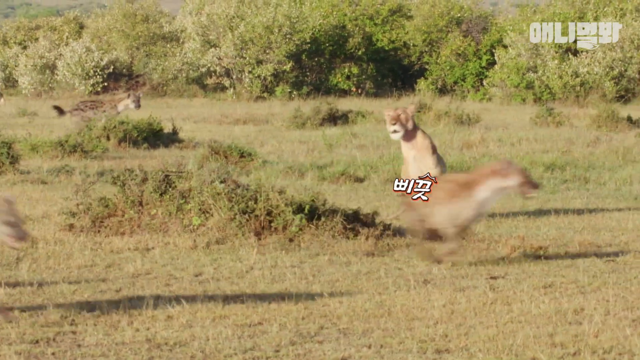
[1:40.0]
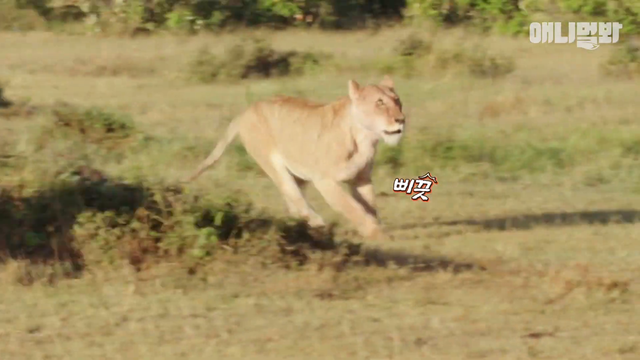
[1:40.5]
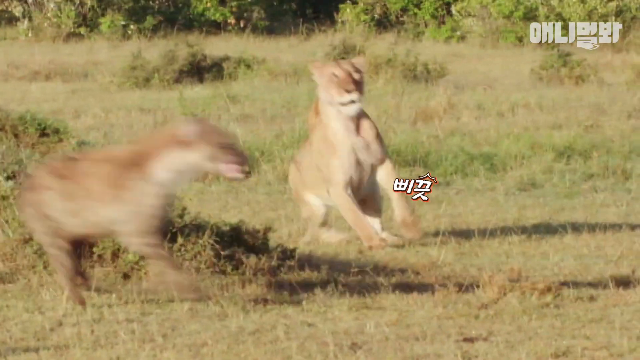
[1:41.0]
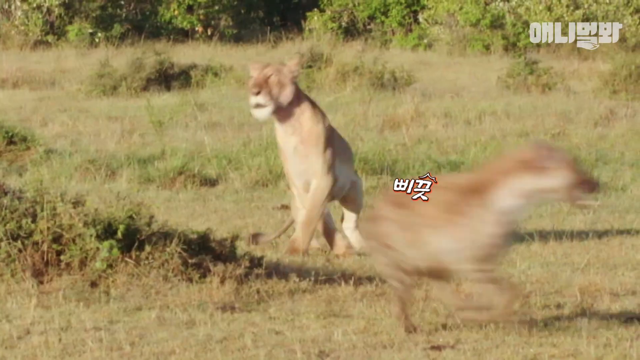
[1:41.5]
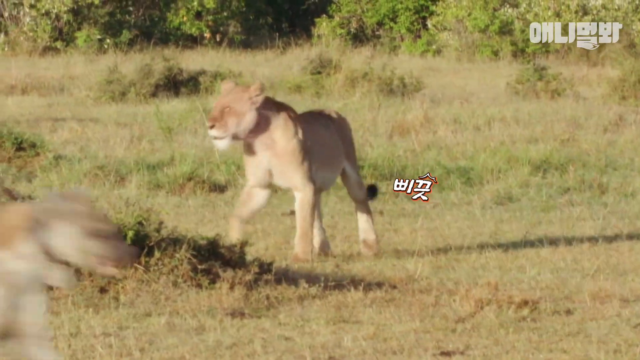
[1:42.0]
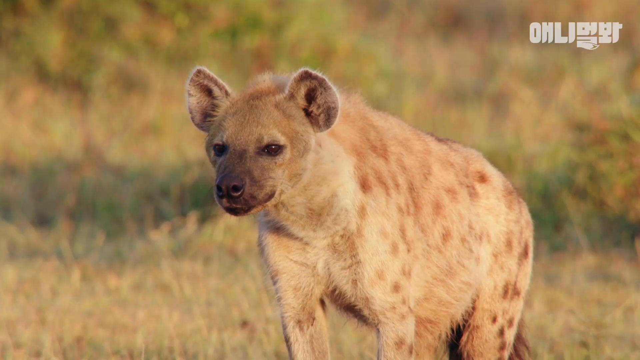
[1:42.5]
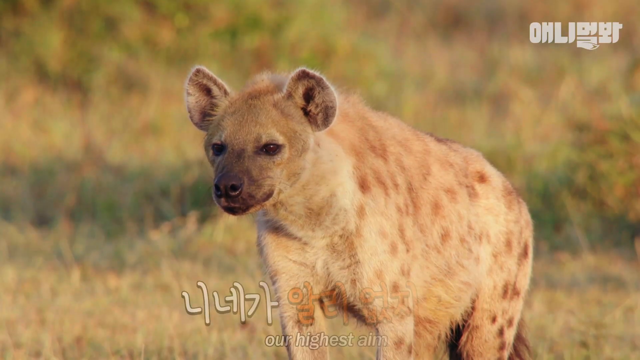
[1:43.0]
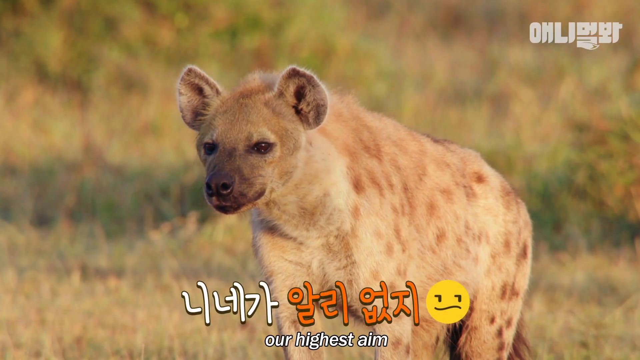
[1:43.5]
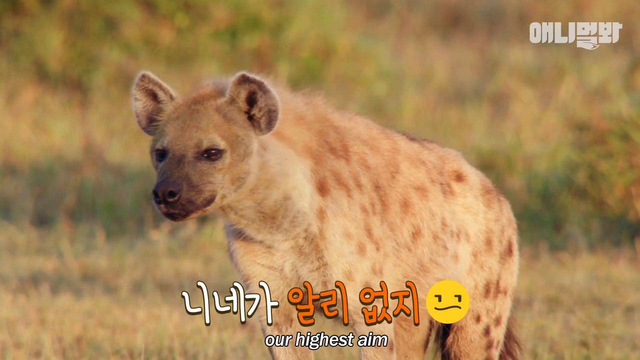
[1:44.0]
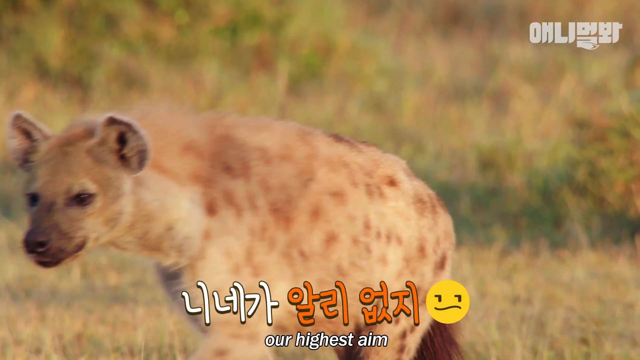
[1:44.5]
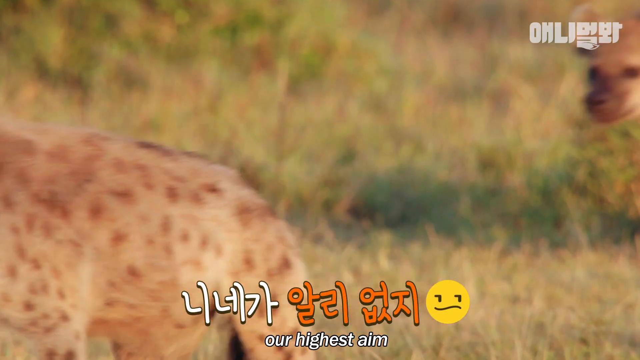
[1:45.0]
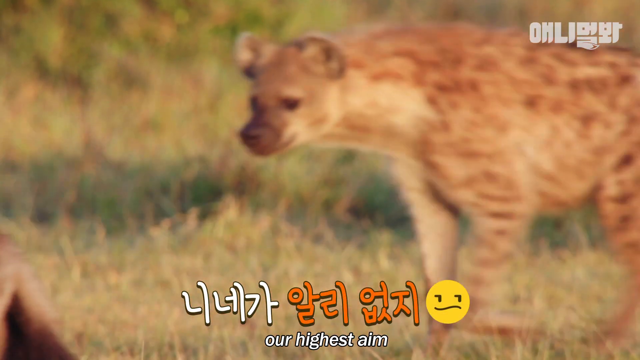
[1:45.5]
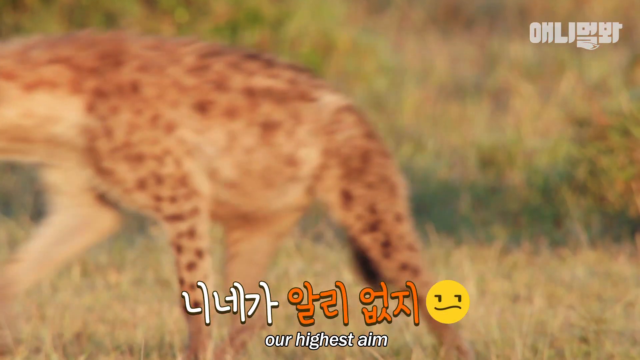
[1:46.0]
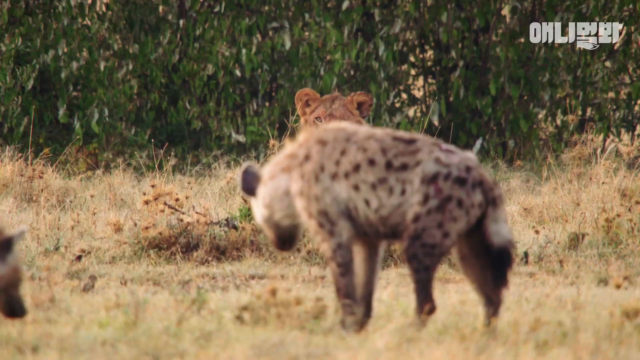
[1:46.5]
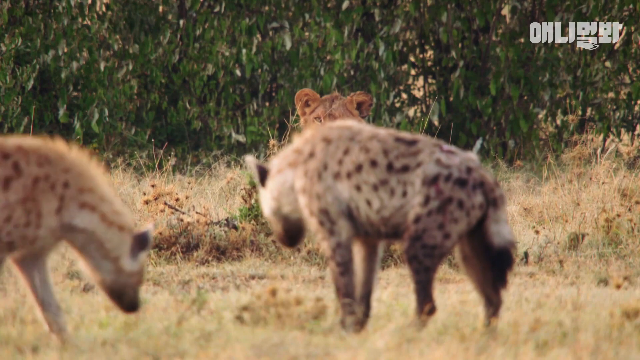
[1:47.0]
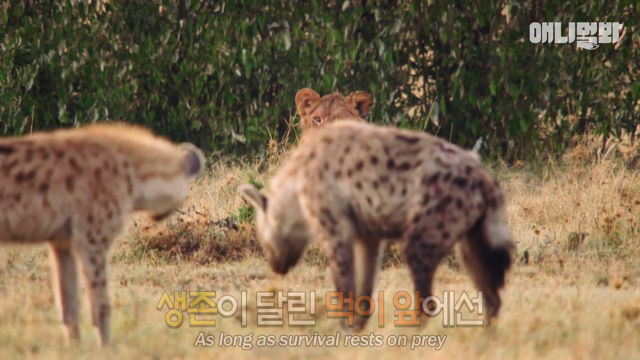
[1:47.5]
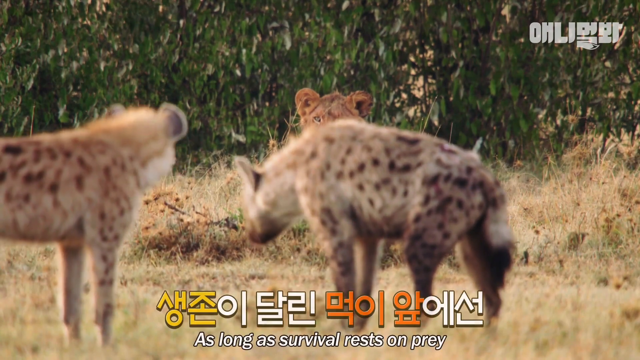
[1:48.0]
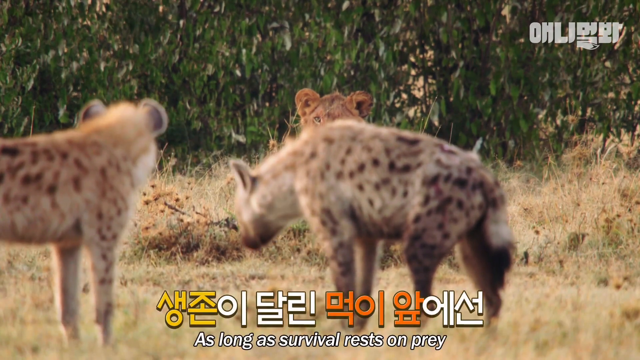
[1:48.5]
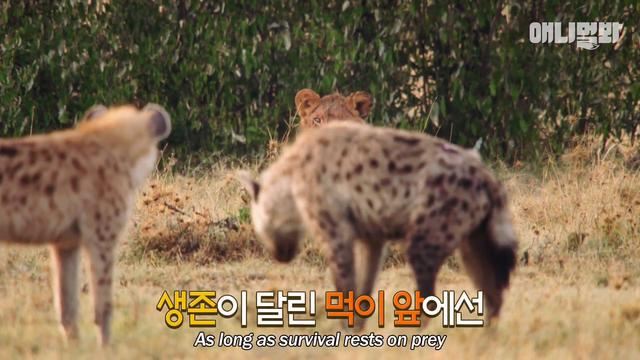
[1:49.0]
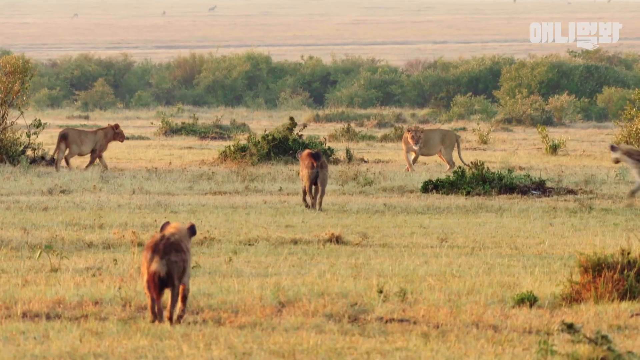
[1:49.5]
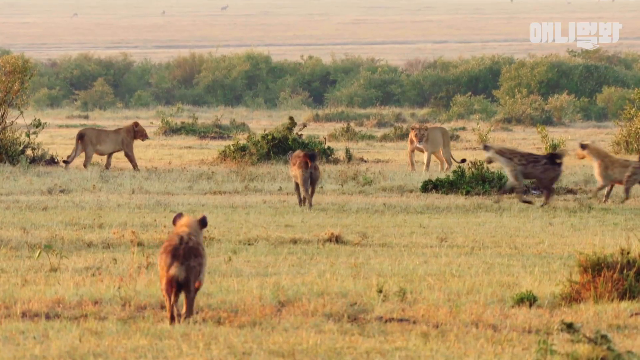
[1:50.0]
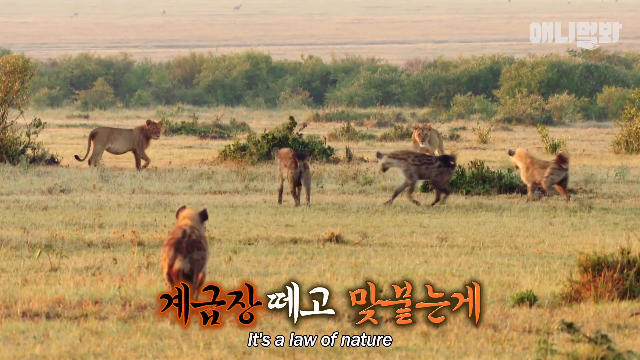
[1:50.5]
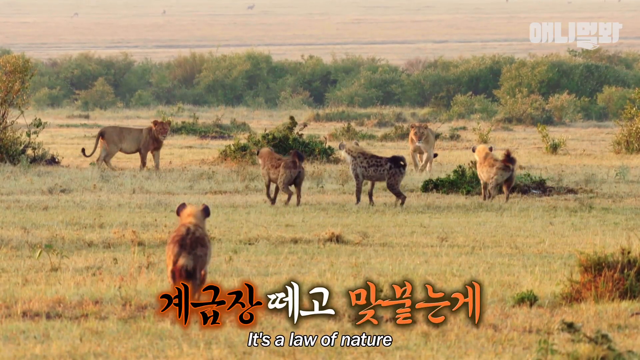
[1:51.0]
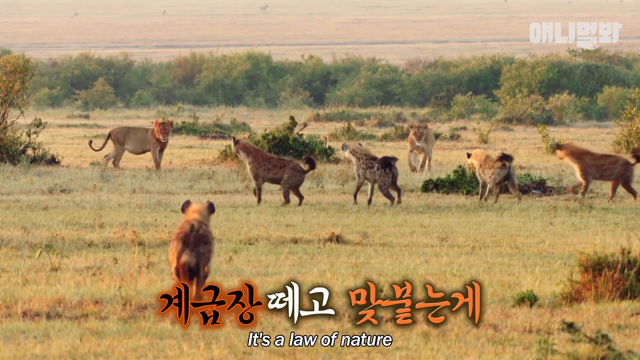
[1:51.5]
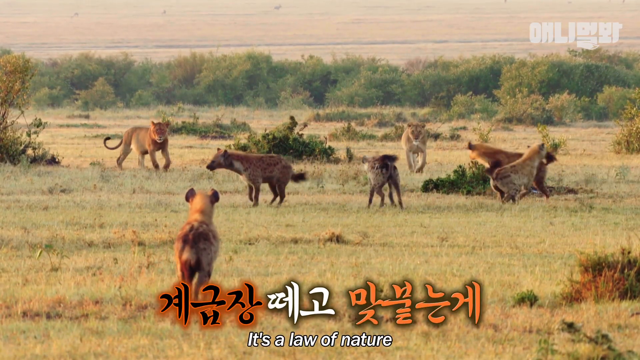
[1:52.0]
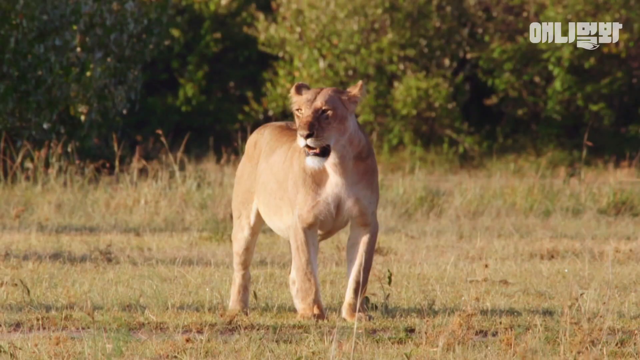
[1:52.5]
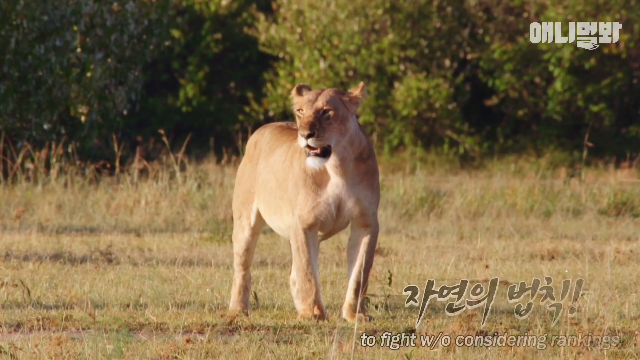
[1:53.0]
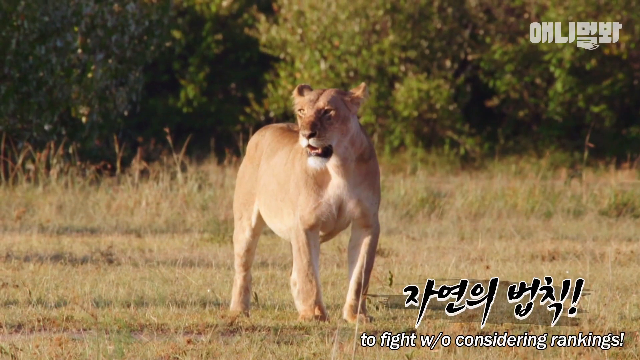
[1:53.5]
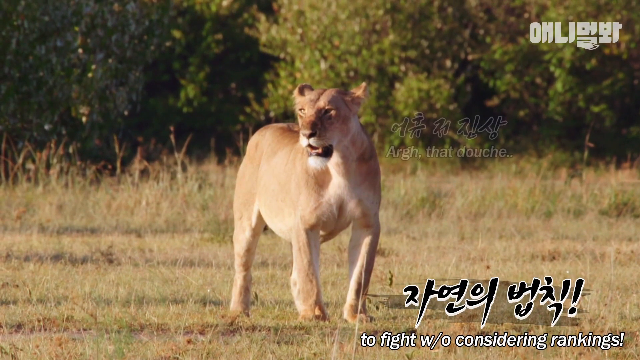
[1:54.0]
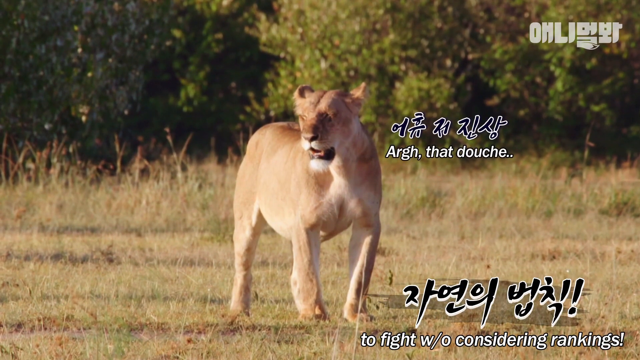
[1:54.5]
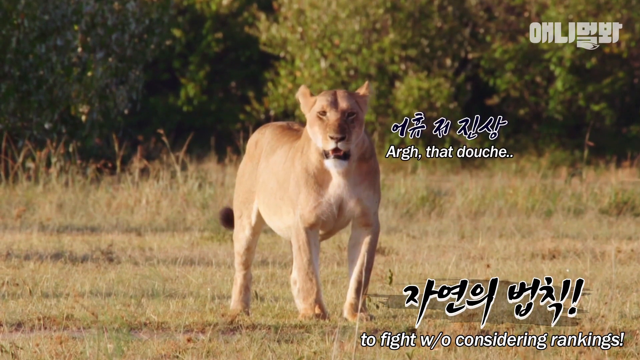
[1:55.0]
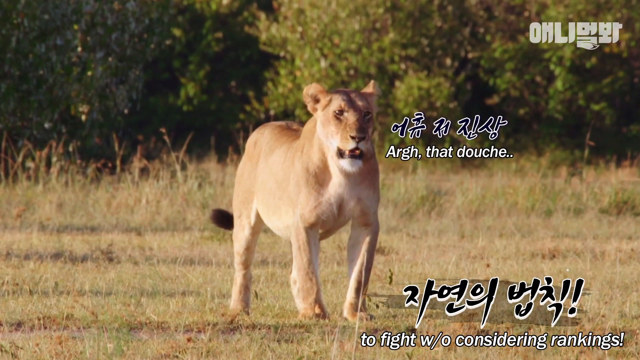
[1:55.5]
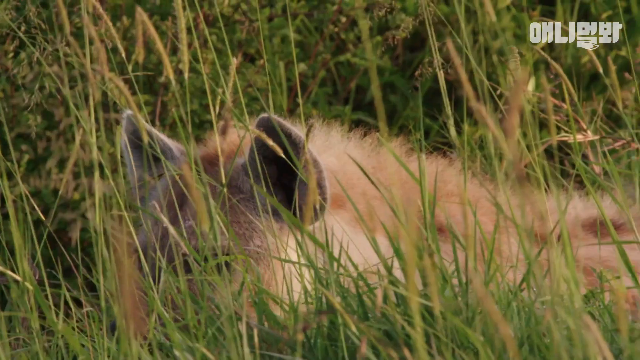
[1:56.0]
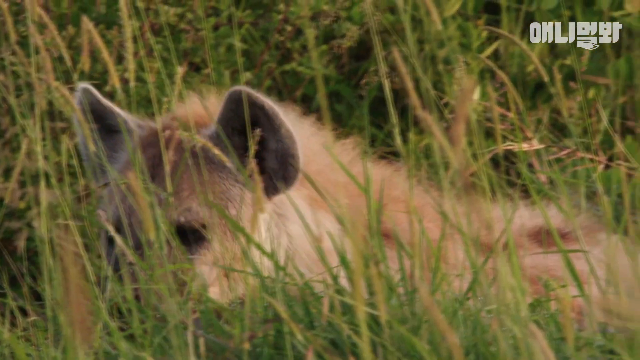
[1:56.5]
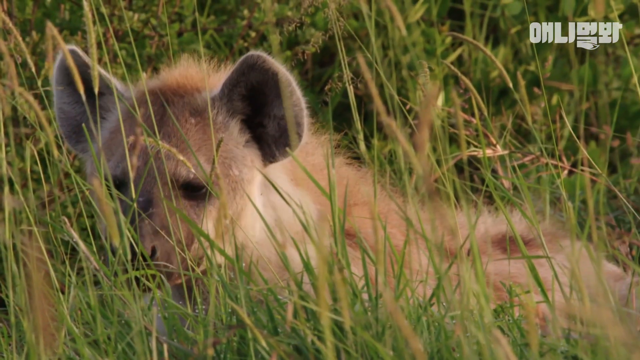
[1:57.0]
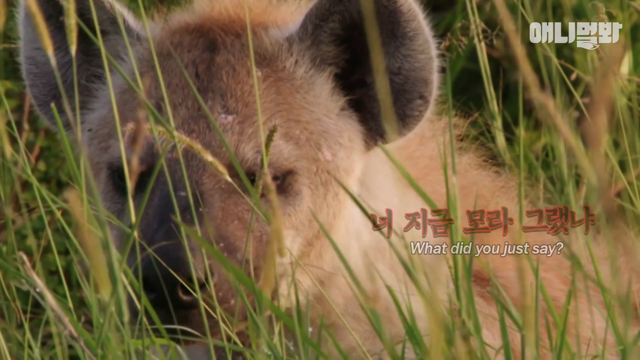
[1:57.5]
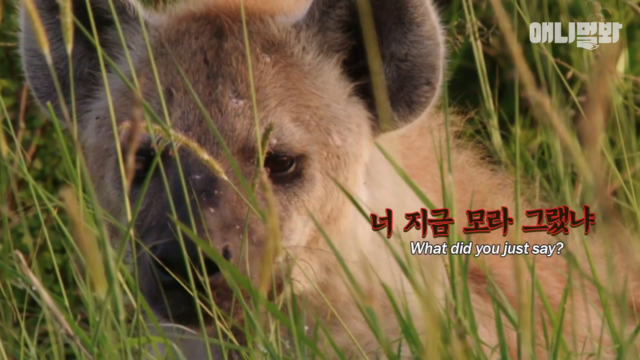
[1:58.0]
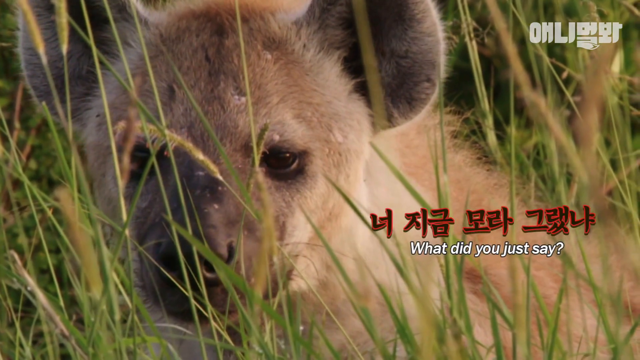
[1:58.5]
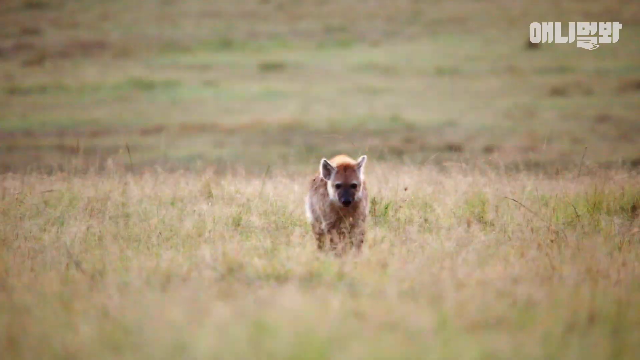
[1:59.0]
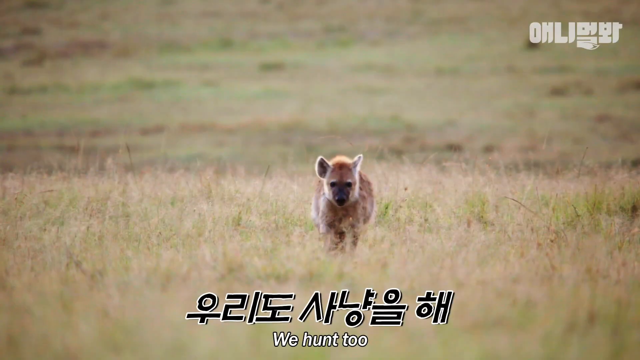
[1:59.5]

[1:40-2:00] The hyenas appear to have evaded the lioness, who appears to be tired out. There are close-up shots of hyenas' faces, and some hyenas are seen confronting a group of lions or just running around. Some lions are sprawled out on the savanna. At the end, the hyenas suggest that they can do what the lions can as well.